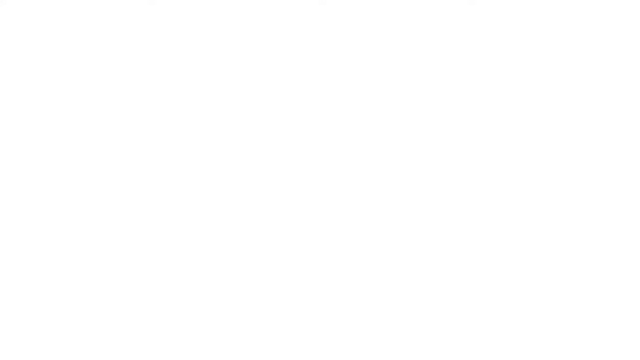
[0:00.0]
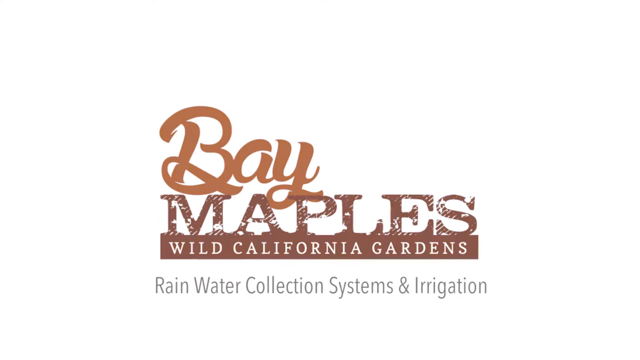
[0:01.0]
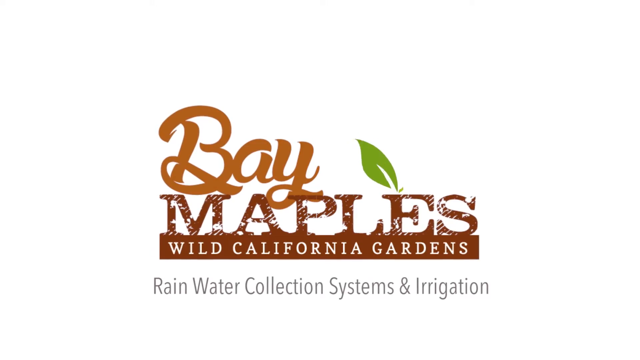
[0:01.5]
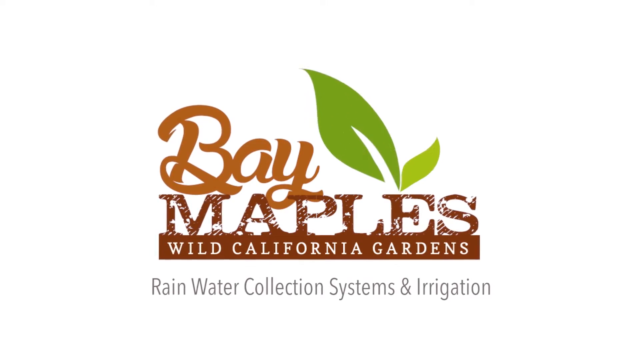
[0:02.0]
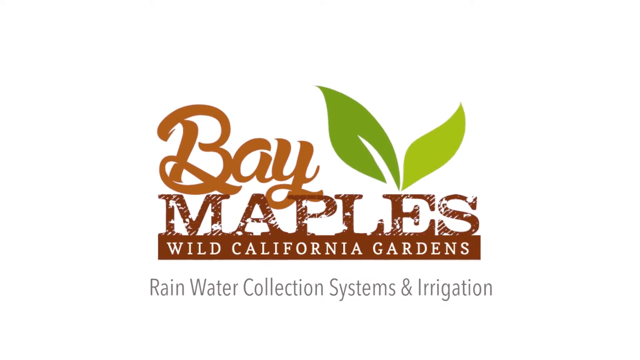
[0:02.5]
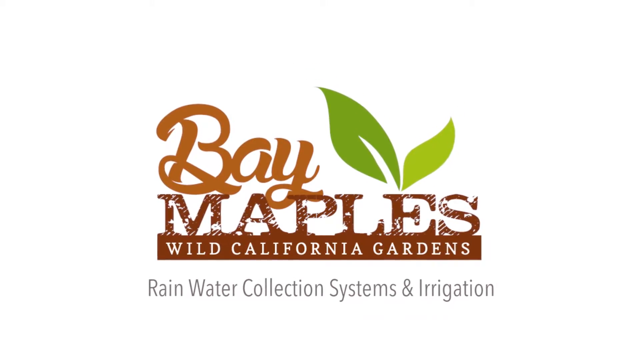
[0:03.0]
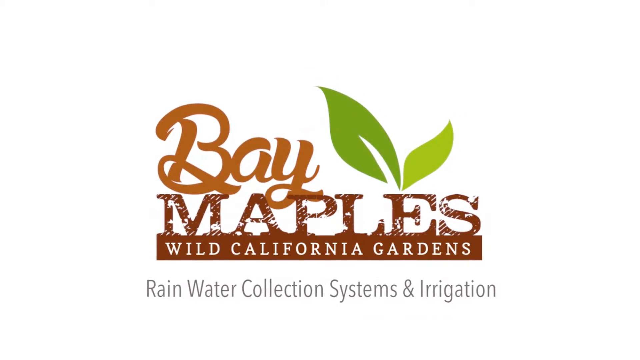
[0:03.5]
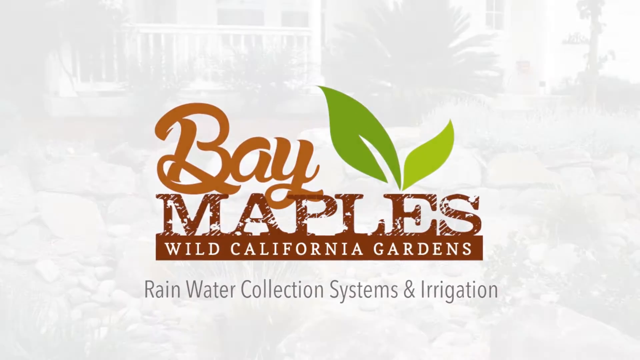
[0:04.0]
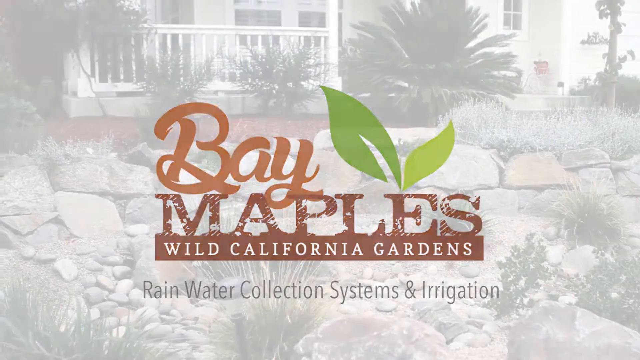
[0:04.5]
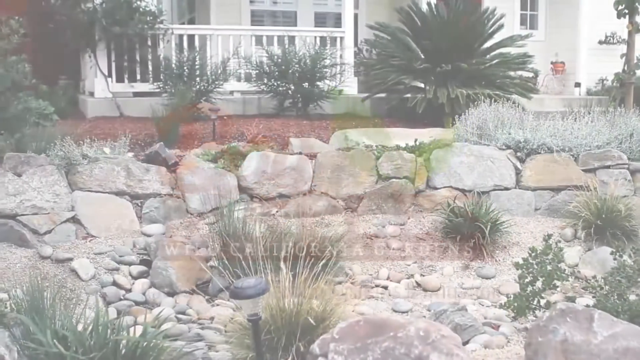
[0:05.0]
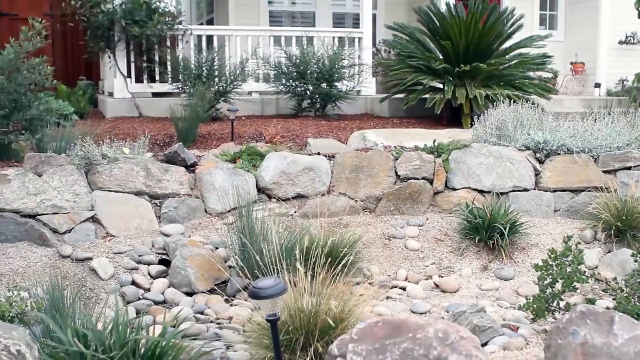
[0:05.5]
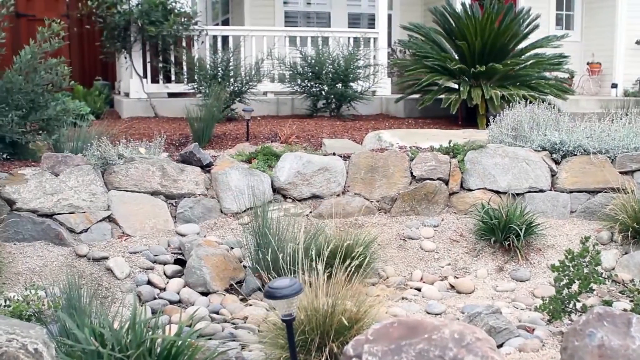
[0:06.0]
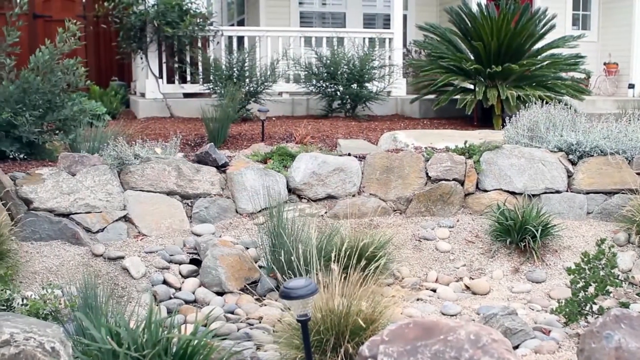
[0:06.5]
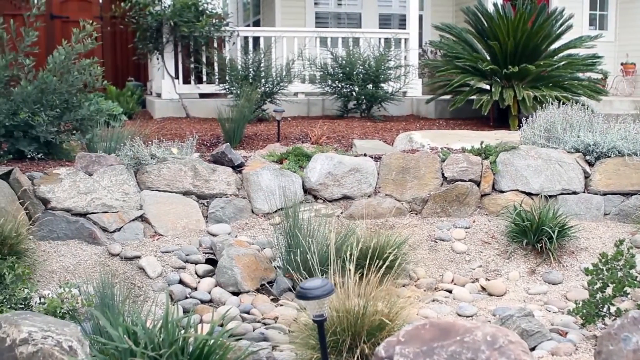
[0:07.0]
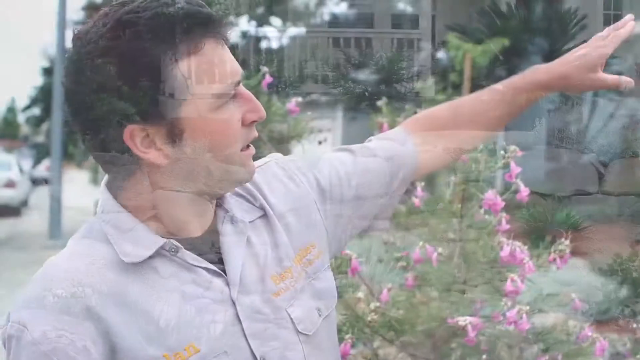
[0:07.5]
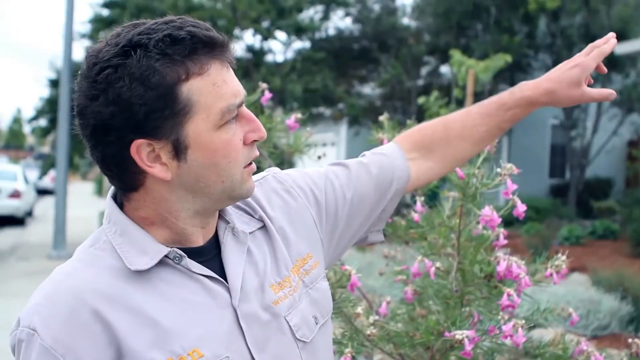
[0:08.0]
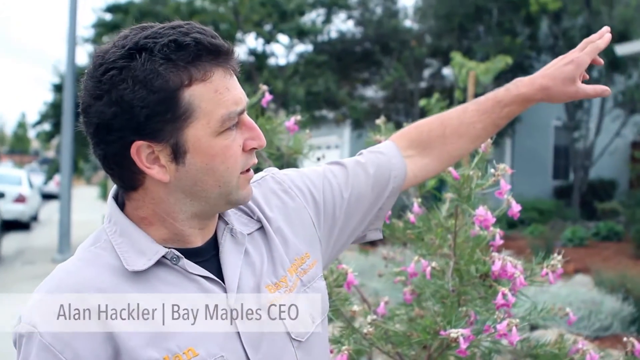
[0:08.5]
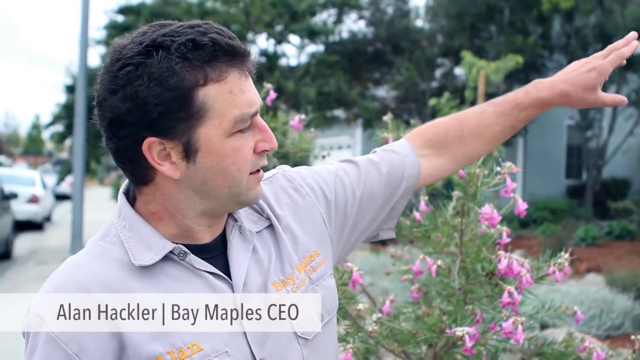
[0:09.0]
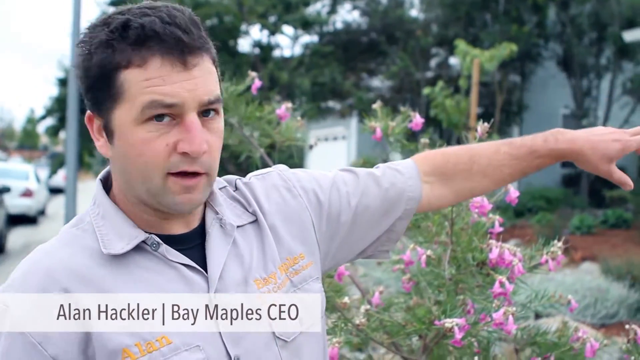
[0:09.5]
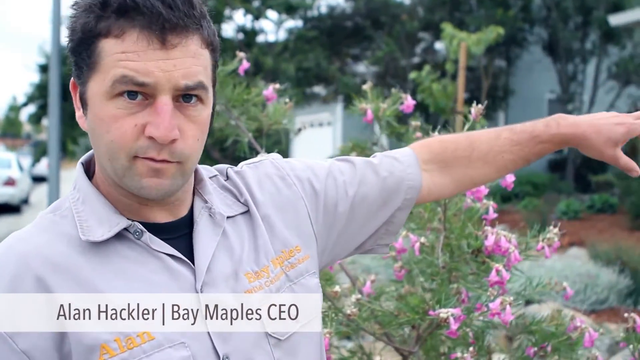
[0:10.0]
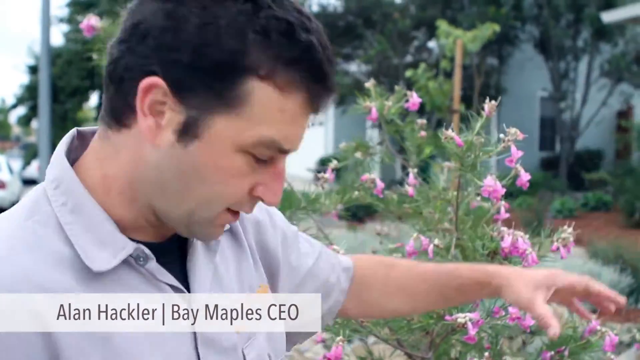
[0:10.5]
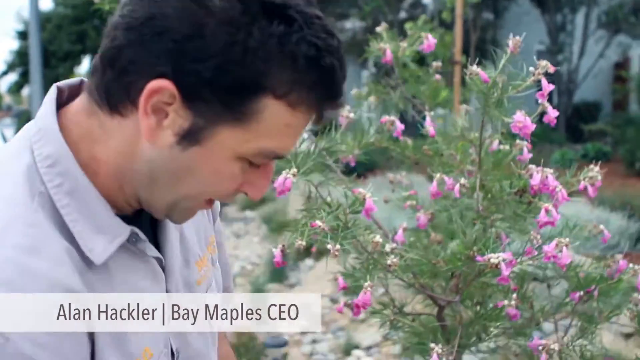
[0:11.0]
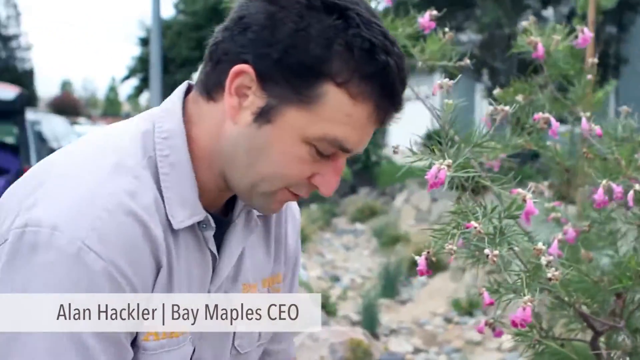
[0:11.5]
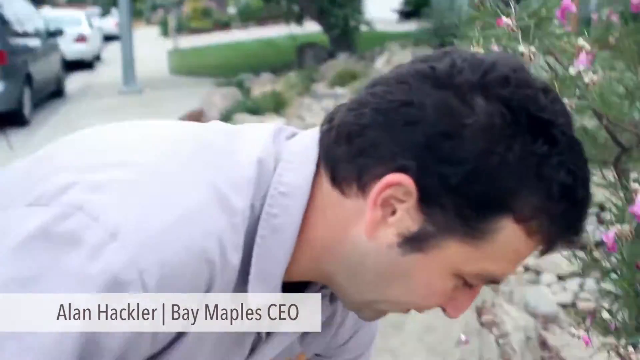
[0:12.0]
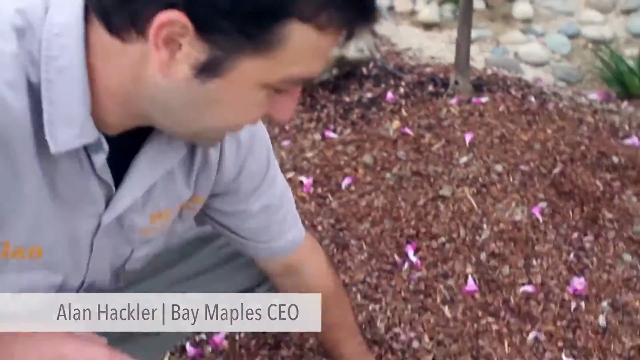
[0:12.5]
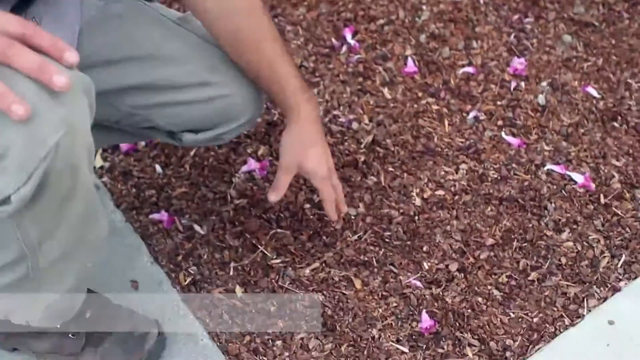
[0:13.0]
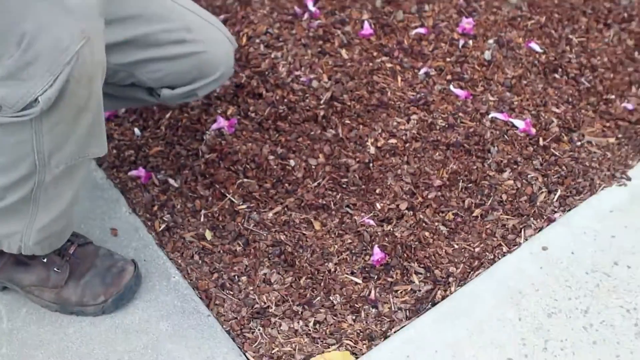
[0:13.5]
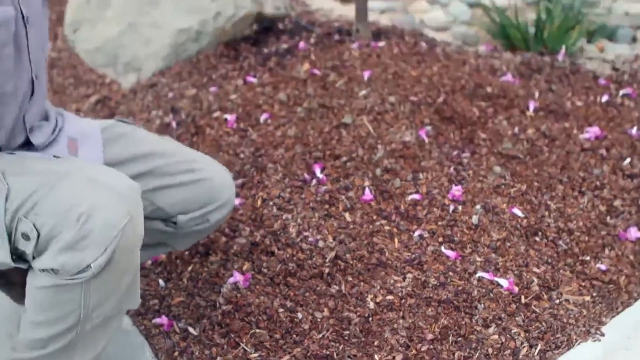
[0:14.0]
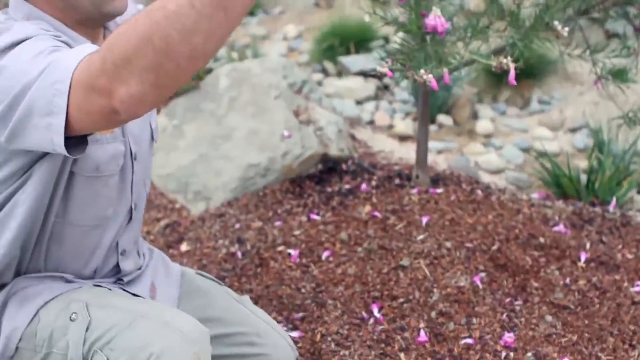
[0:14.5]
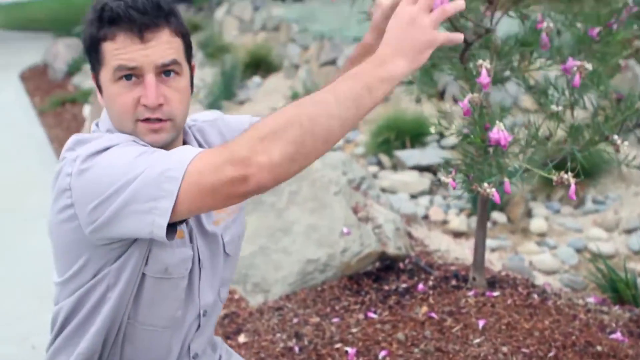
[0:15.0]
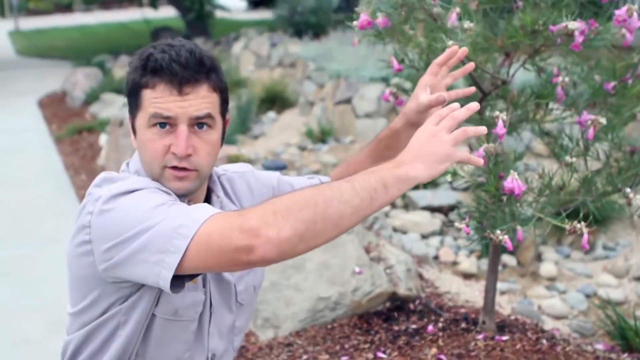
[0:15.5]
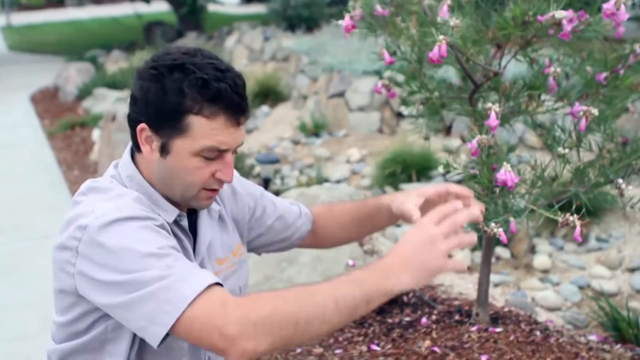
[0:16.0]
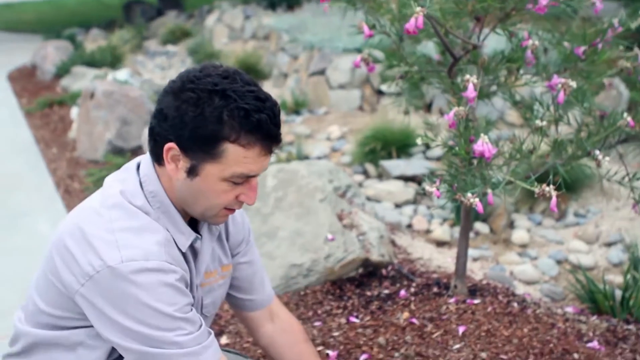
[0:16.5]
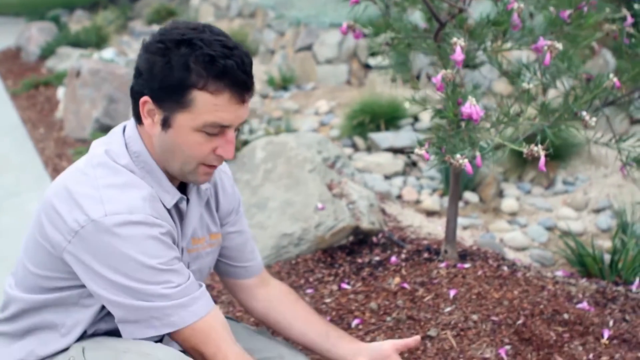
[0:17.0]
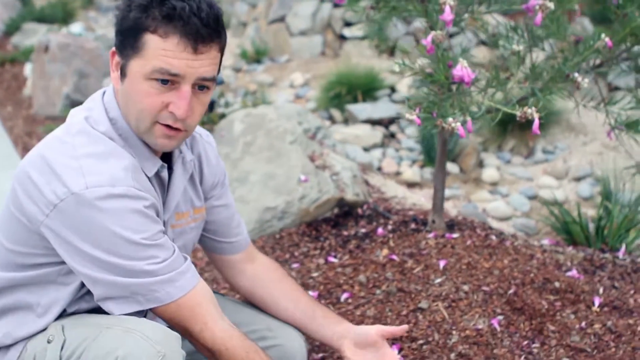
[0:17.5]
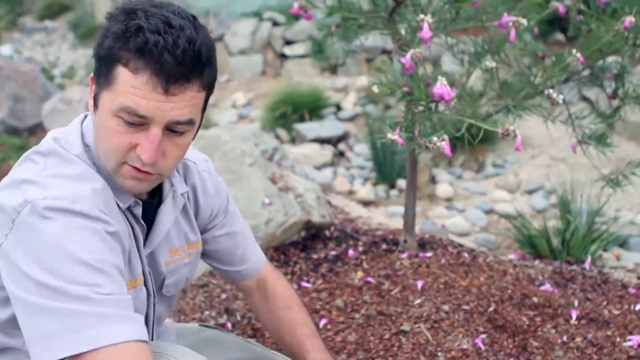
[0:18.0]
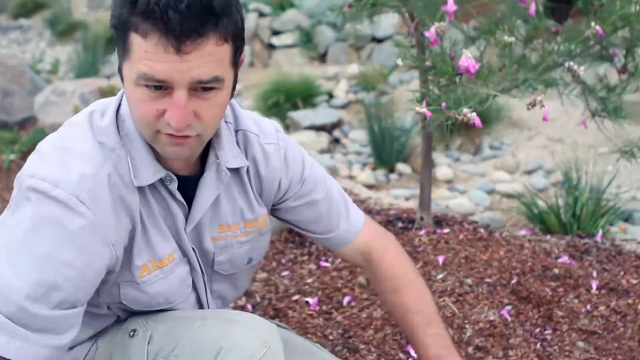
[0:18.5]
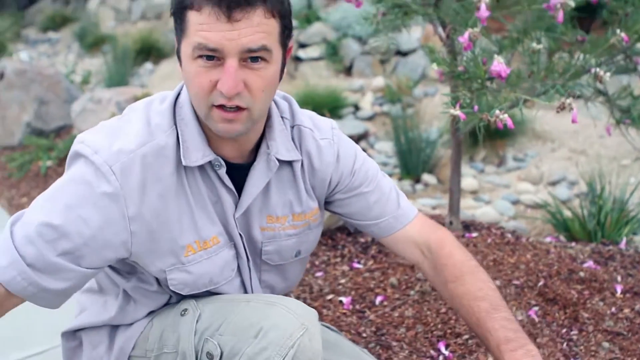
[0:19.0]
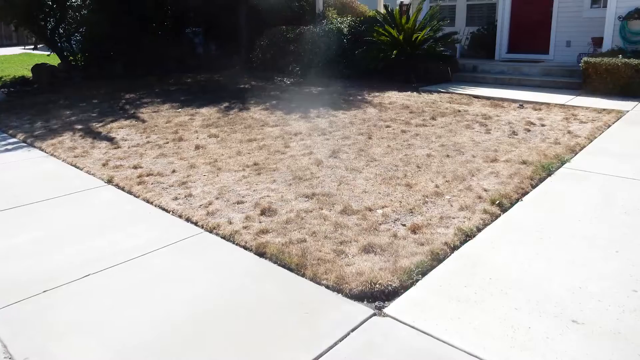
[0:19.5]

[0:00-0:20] The video introduces Bay Maples Wild California Gardens and shows huge rocks, plants and trees, along with the soil the plants are planted in, which seems slightly different. The rocks are very big but vary in size, some much bigger than others. One plant, a flower, is green with light pink petals. A young man named Ellen shows the type of soil he uses to plant his crops, which looks fertile. He has short black hair and a light complexion. The setting shifts between different outdoor areas, focusing on the plants, the soil, the trees and the rocks.